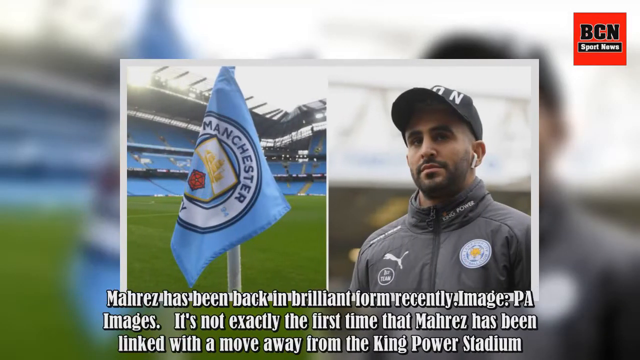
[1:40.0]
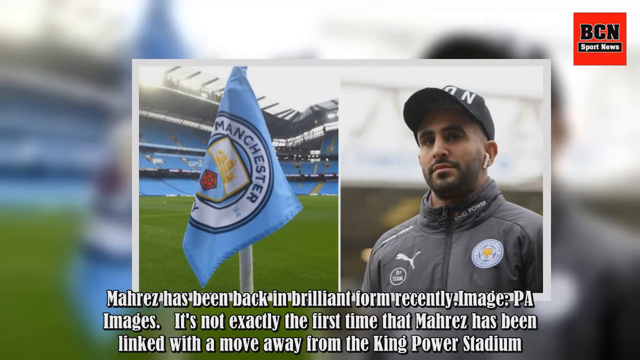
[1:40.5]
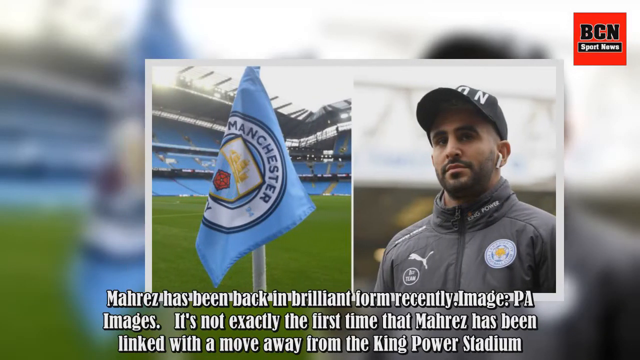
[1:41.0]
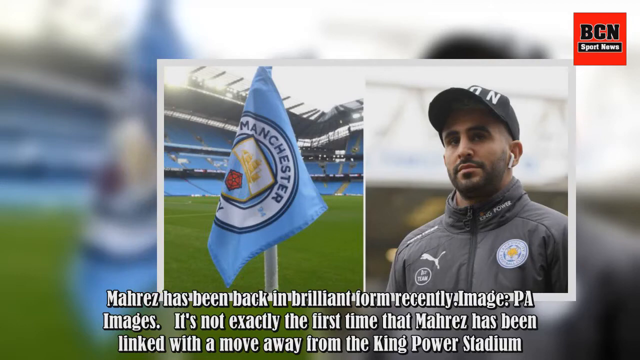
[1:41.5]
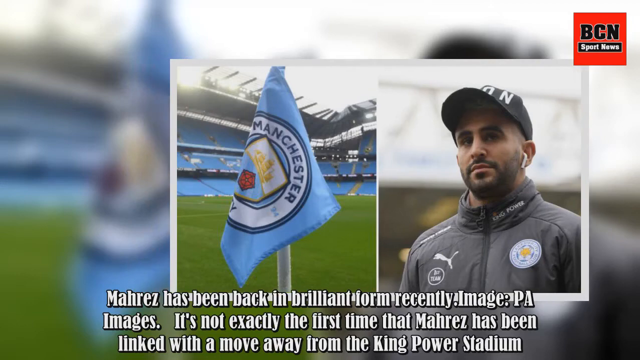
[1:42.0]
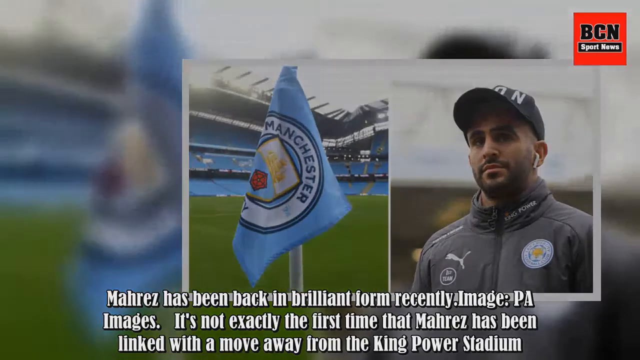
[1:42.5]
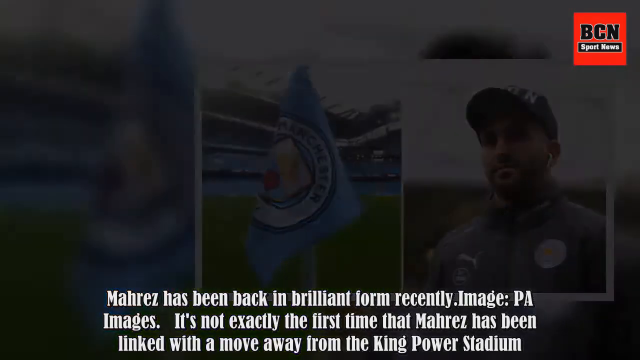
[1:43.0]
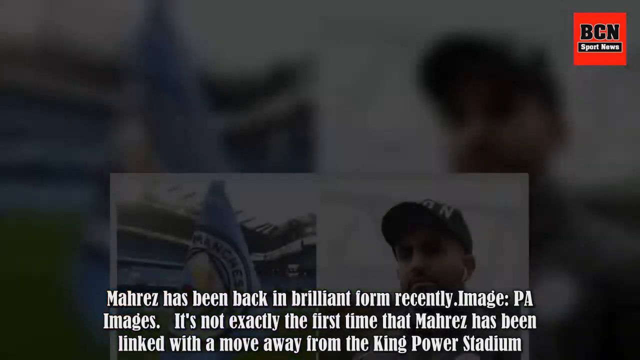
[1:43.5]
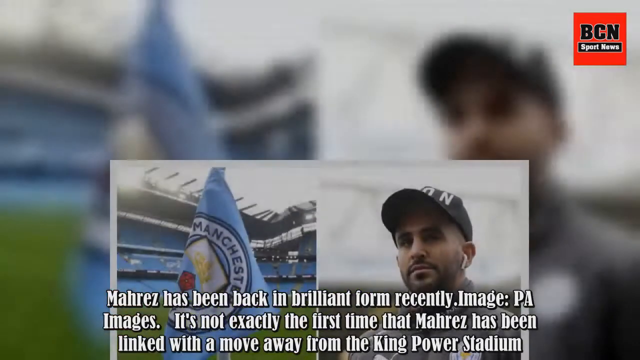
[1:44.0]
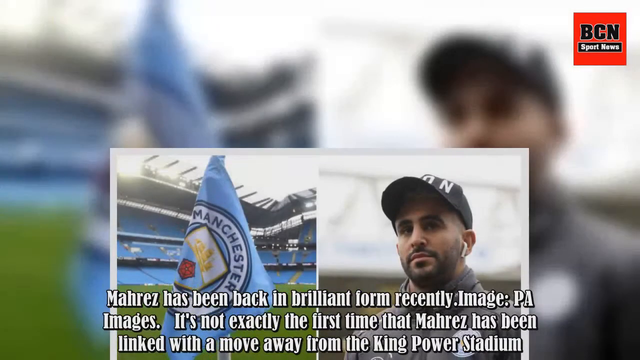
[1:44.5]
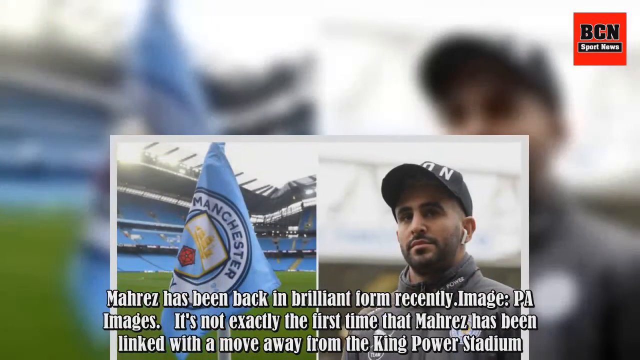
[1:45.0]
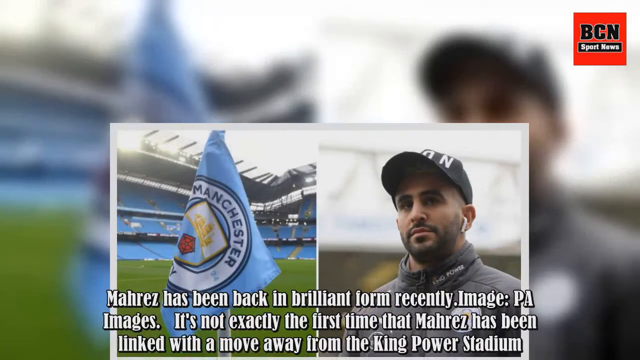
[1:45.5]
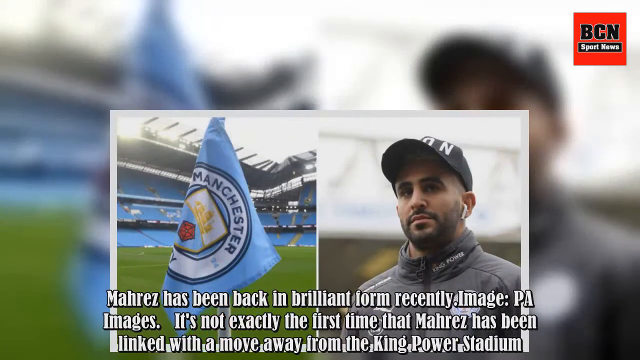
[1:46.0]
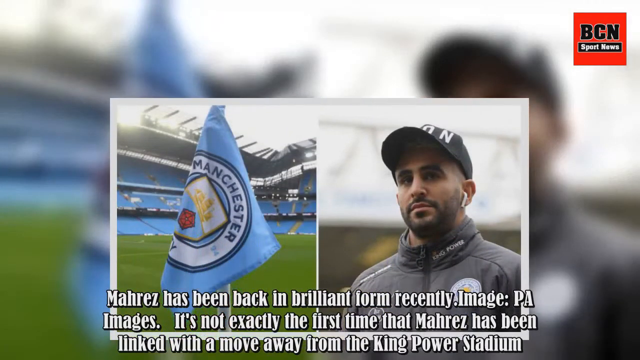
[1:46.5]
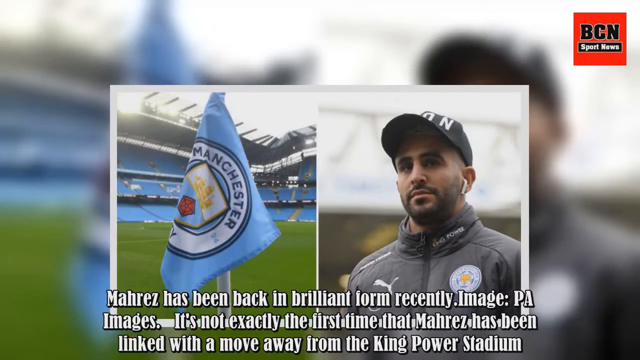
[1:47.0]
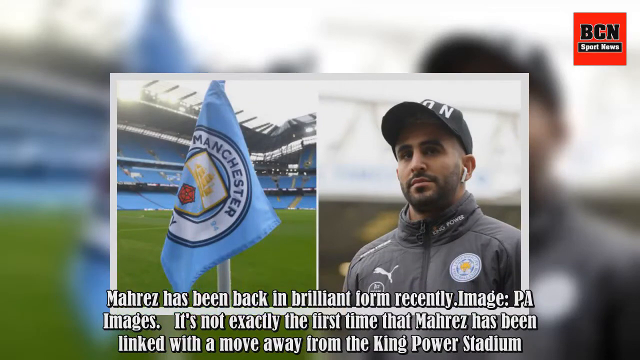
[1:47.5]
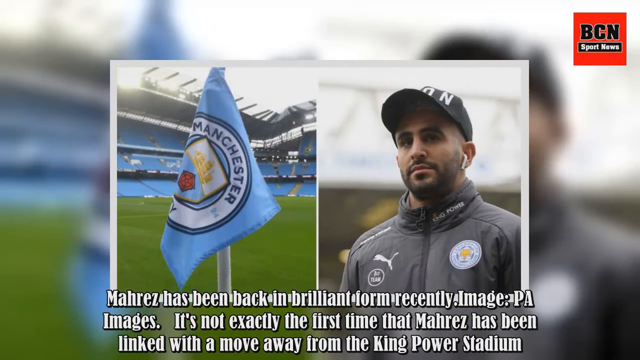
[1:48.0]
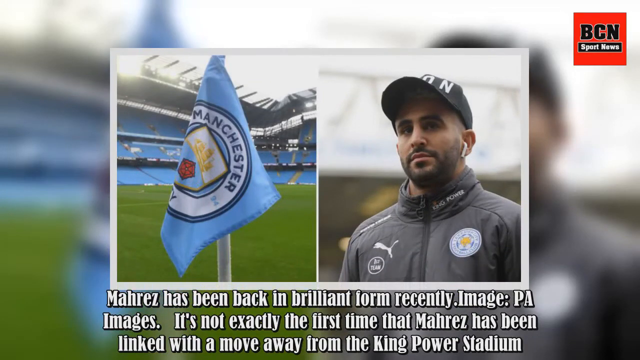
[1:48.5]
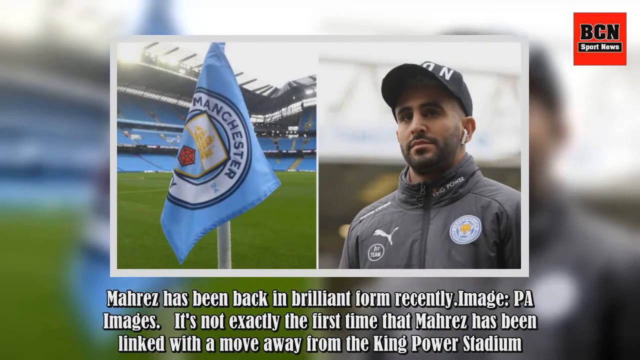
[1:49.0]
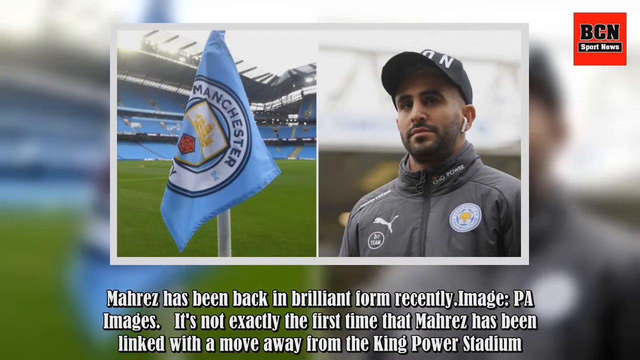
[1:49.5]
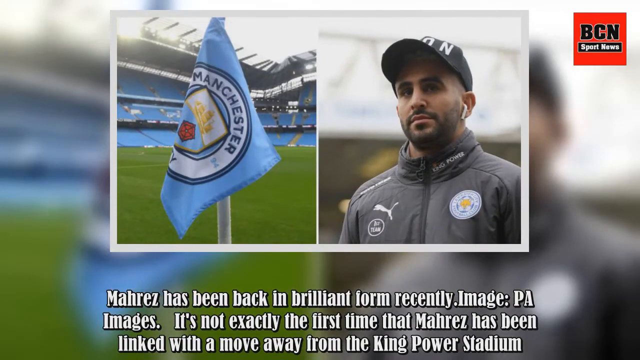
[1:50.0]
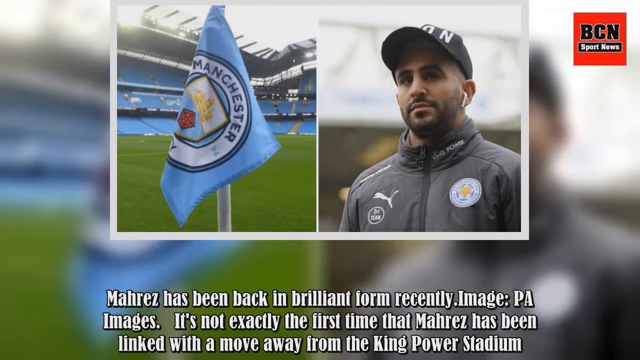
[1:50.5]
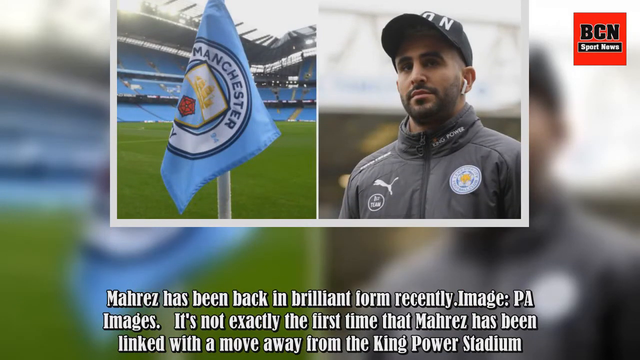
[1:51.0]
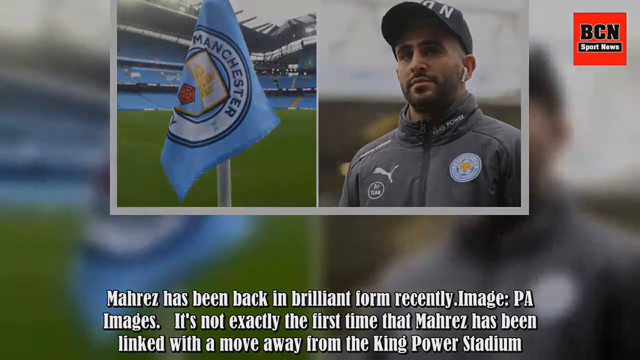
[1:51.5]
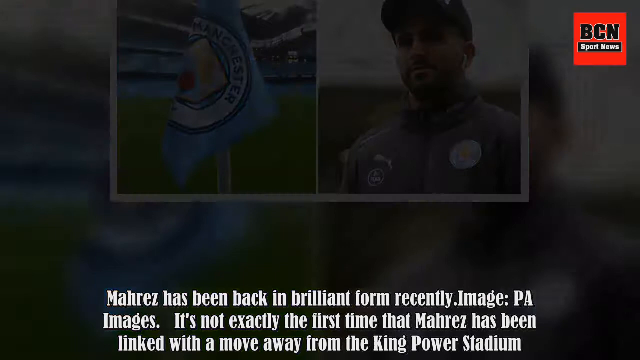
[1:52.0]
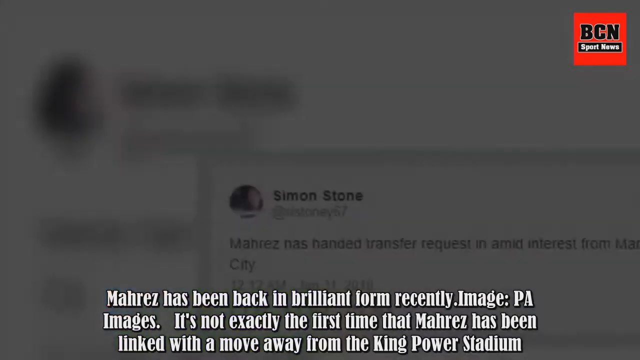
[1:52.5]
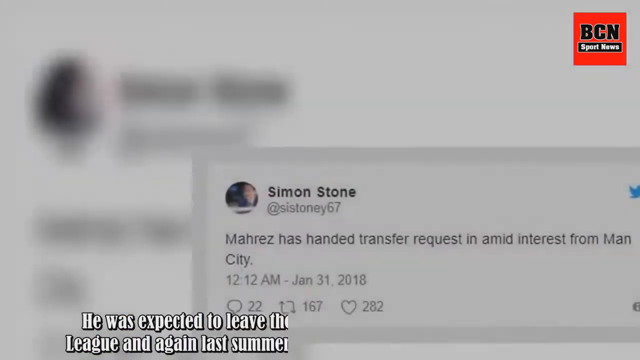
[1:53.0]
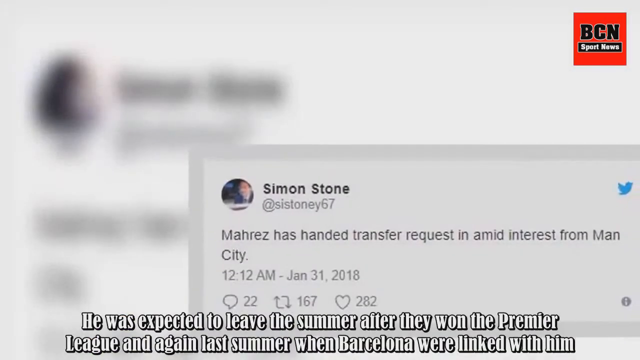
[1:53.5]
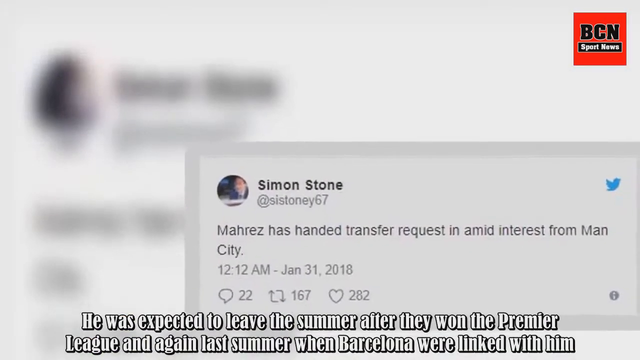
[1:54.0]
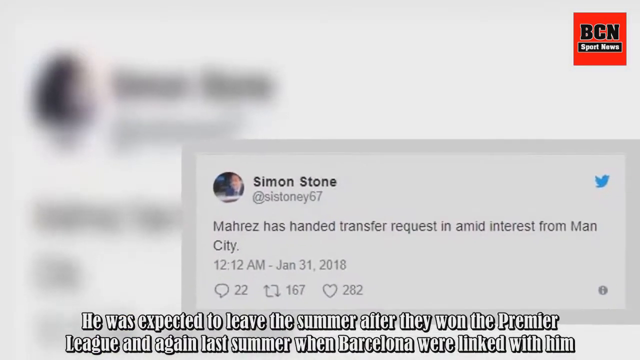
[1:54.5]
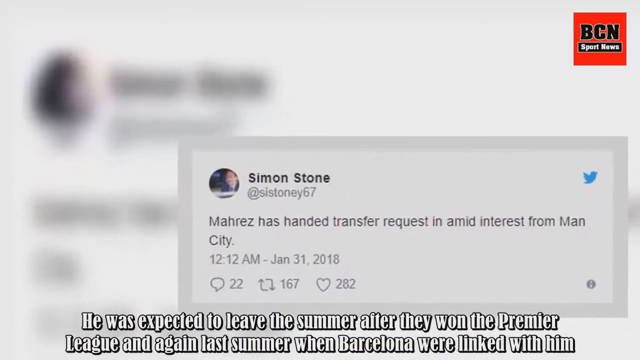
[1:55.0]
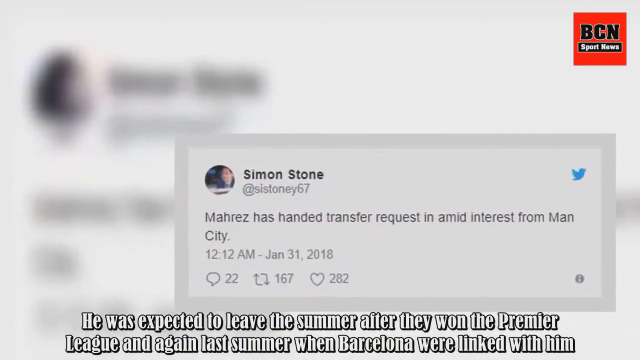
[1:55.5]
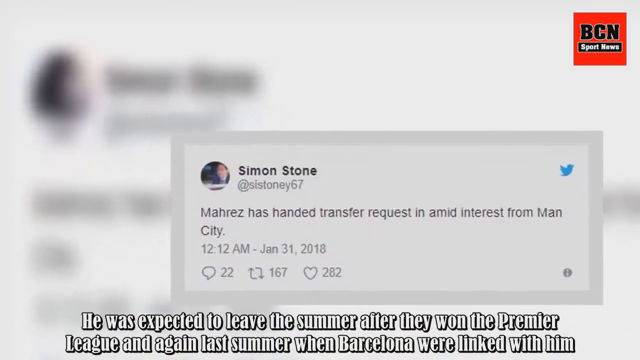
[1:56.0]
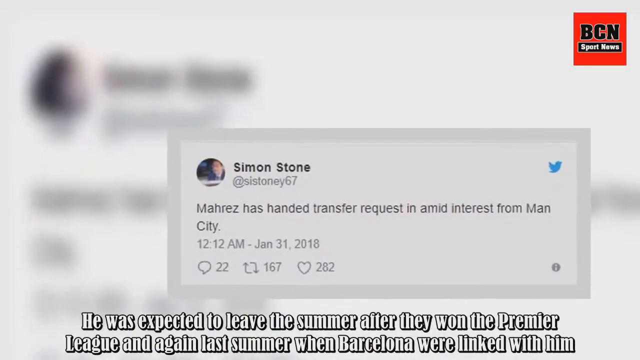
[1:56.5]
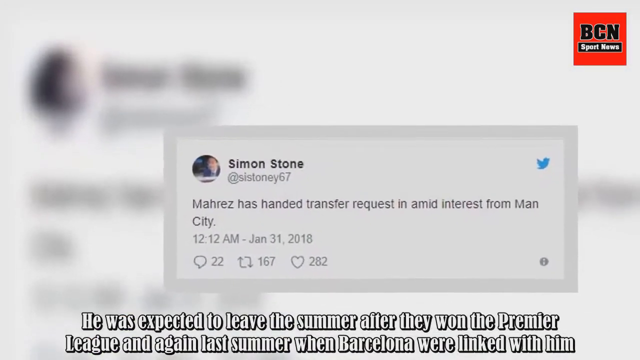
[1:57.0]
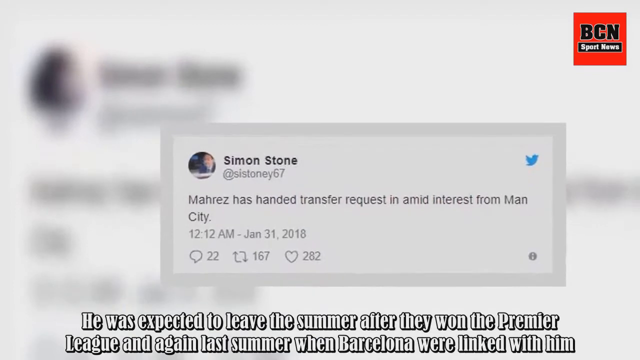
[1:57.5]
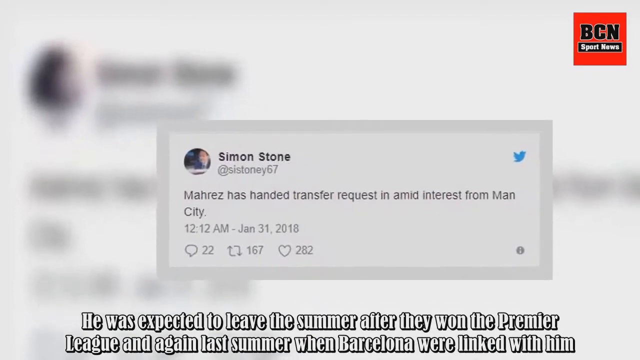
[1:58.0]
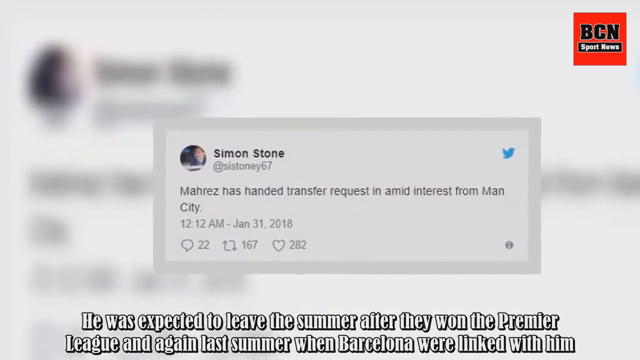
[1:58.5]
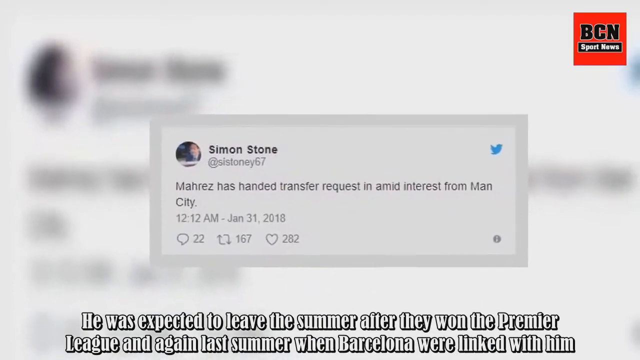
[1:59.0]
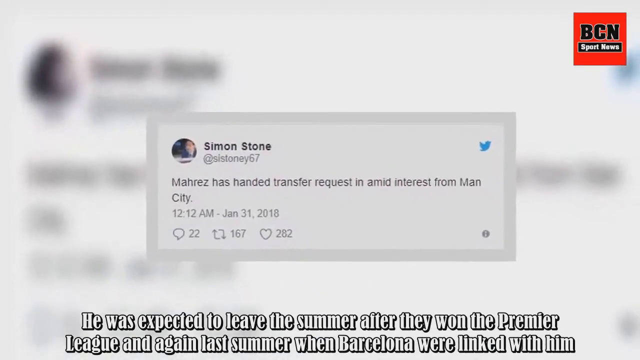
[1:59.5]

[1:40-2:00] A man named Norris is shown on screen wearing a hat with white text on it. His jersey carries a Puma logo and a Manchester City logo. On the left side of the screen, a Manchester City logo is on a blue flag on a very green field, with many empty seats in the background. A logo is in the top right of the screen.